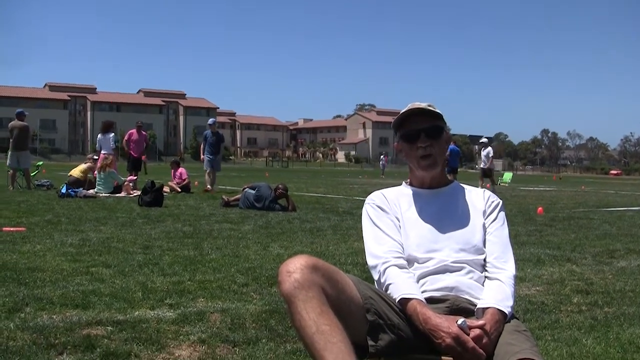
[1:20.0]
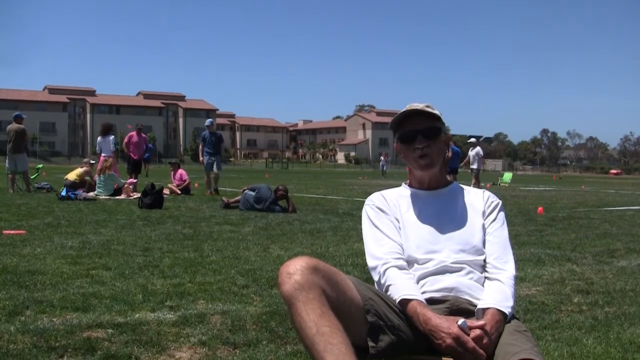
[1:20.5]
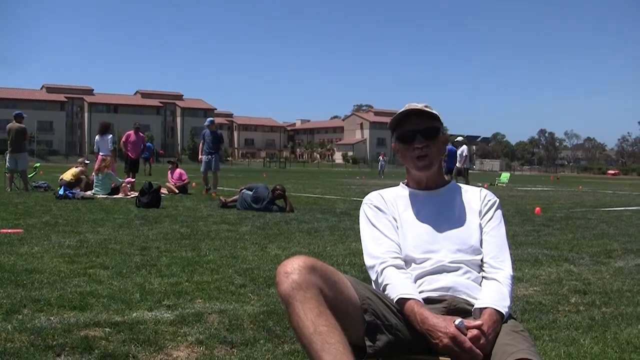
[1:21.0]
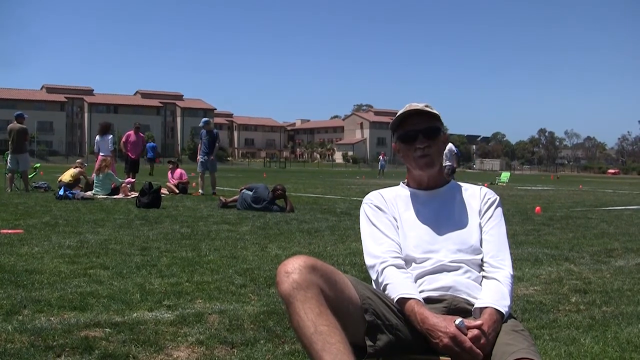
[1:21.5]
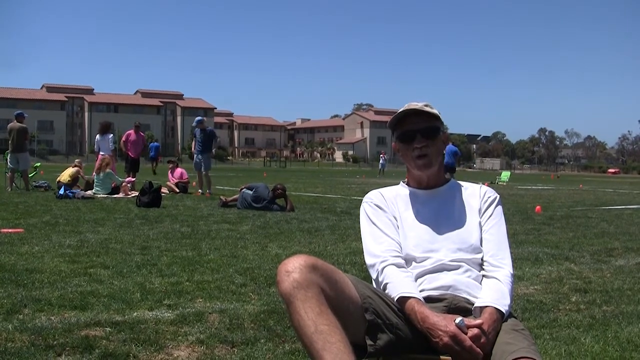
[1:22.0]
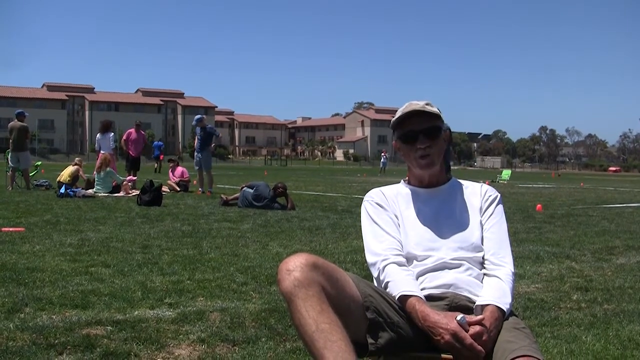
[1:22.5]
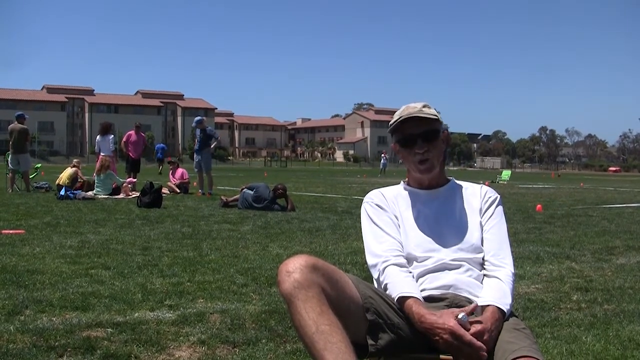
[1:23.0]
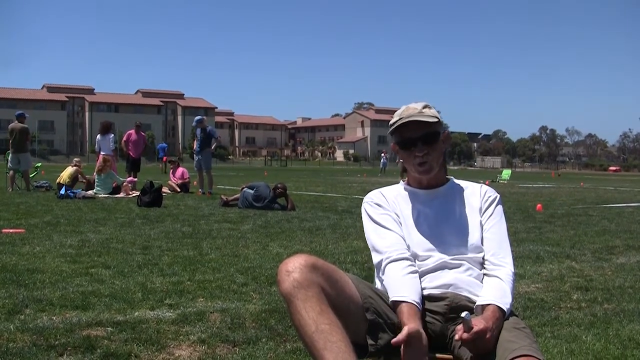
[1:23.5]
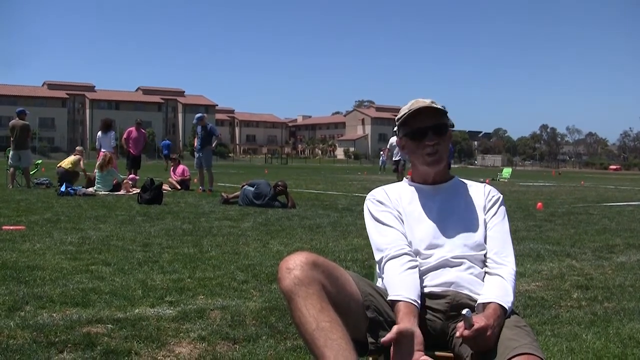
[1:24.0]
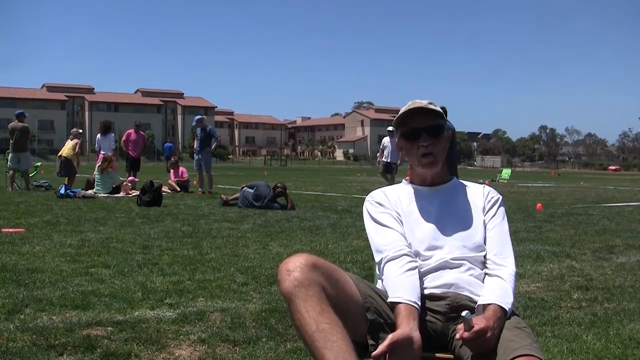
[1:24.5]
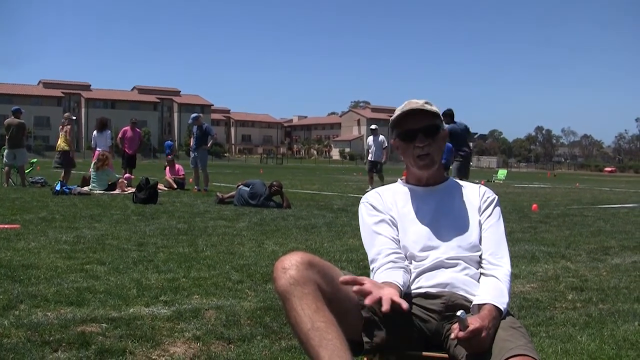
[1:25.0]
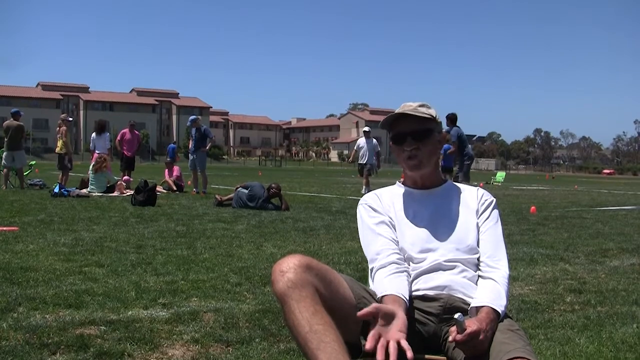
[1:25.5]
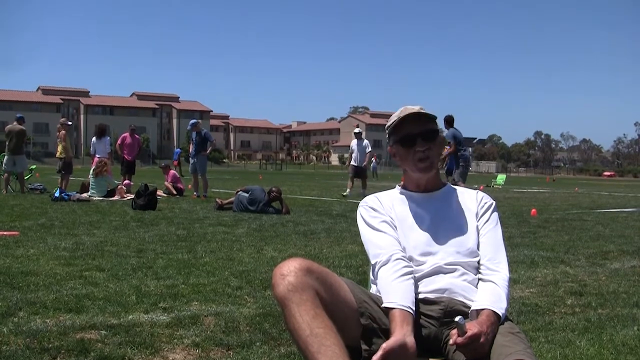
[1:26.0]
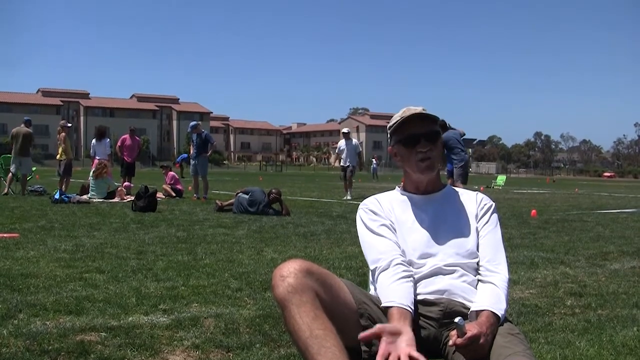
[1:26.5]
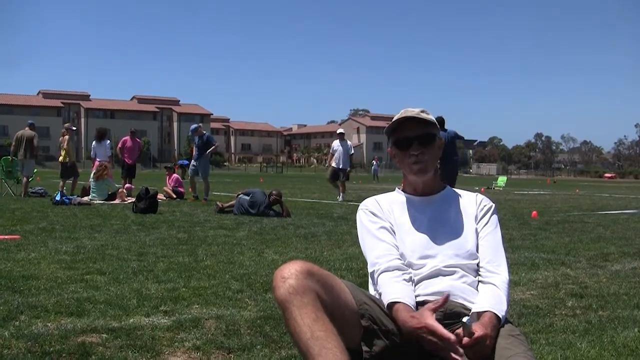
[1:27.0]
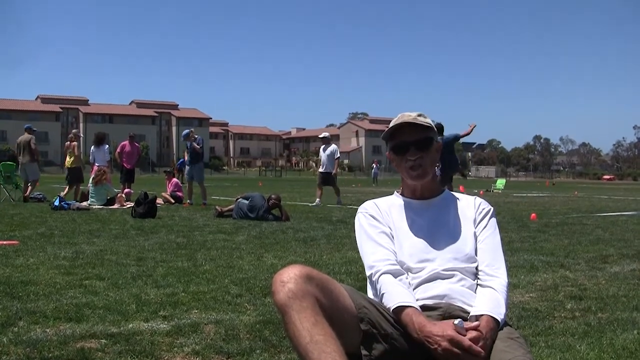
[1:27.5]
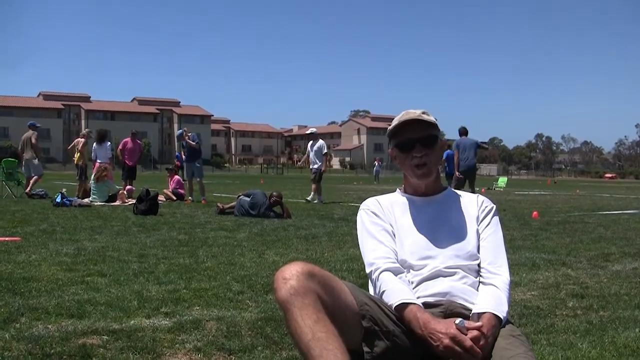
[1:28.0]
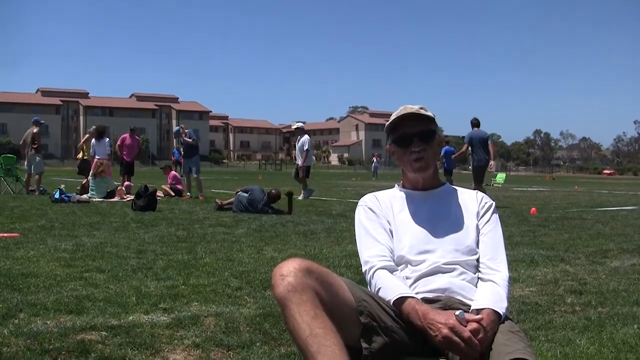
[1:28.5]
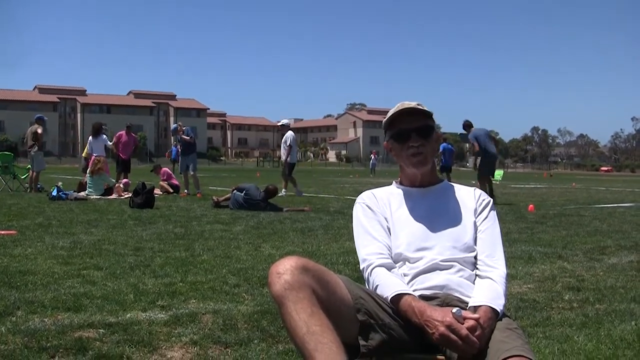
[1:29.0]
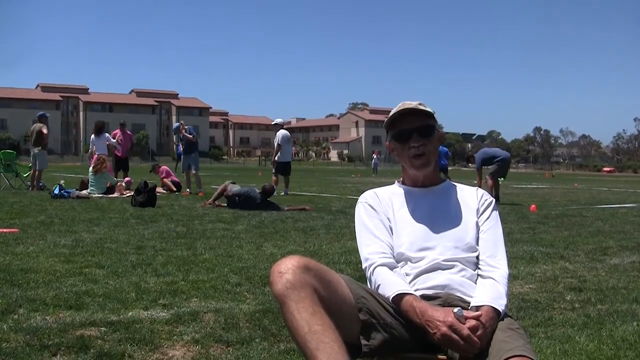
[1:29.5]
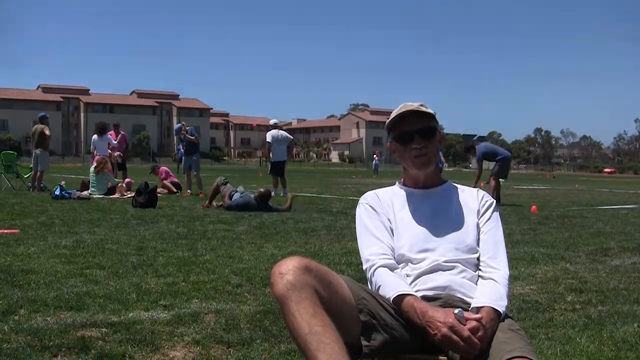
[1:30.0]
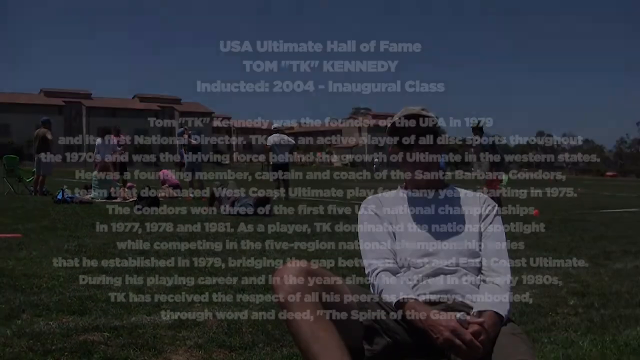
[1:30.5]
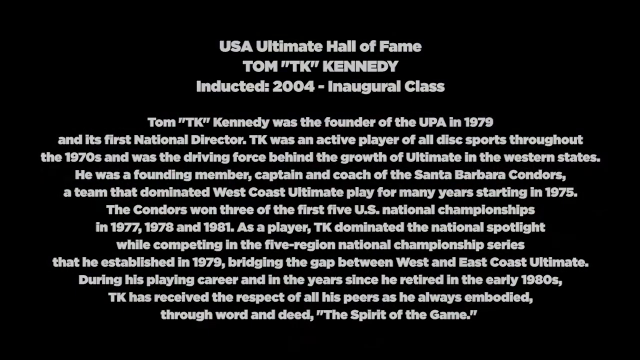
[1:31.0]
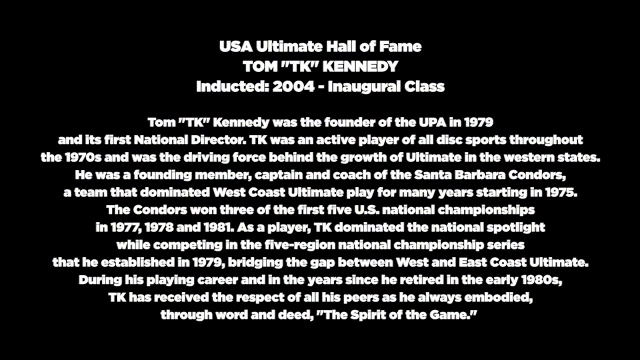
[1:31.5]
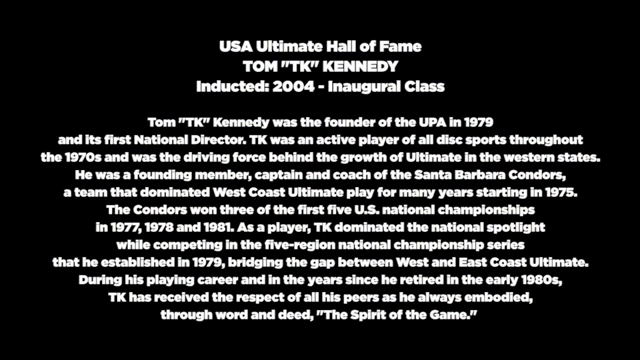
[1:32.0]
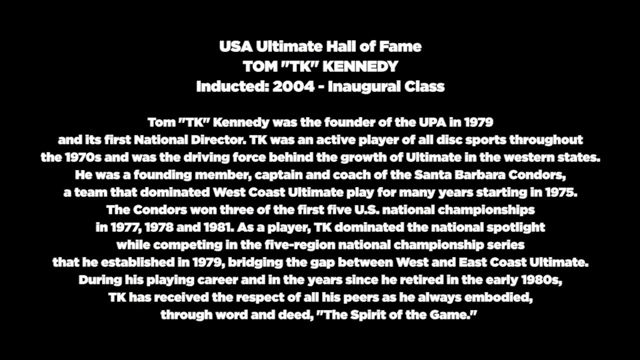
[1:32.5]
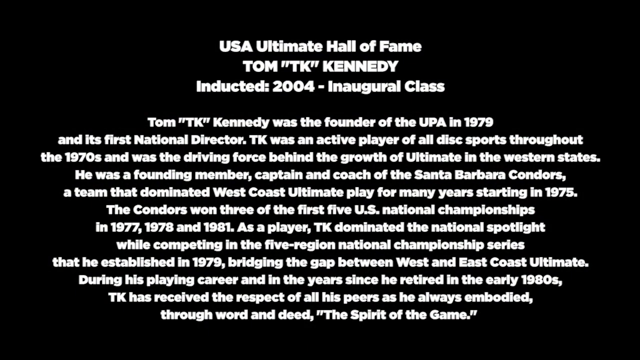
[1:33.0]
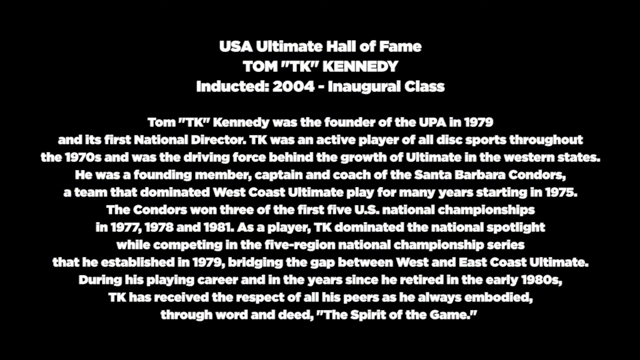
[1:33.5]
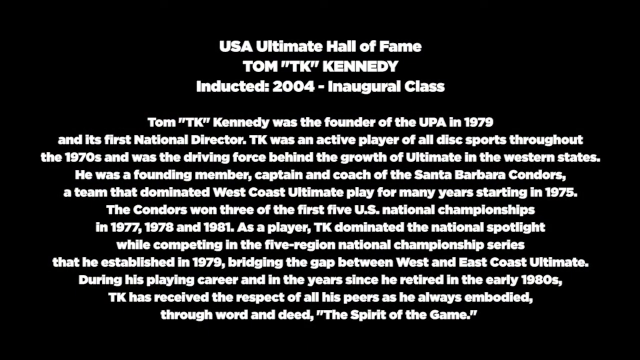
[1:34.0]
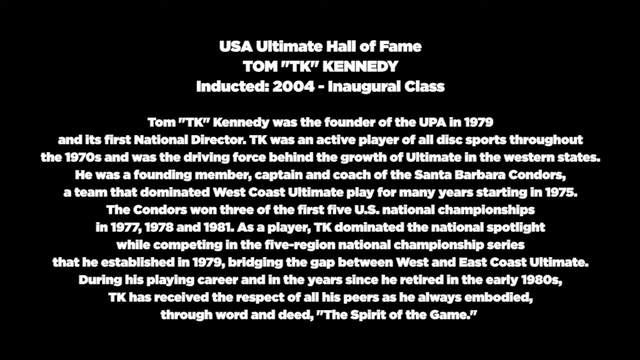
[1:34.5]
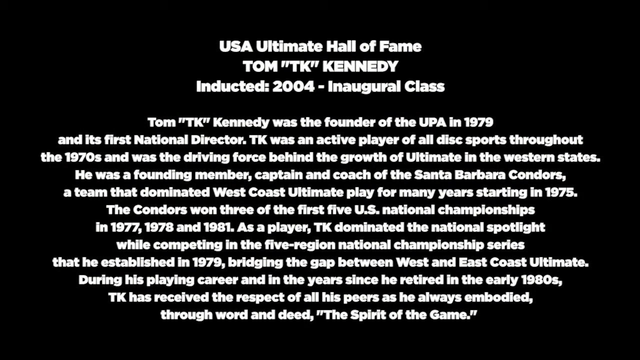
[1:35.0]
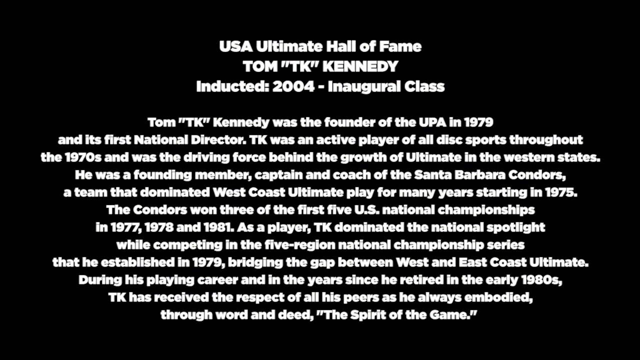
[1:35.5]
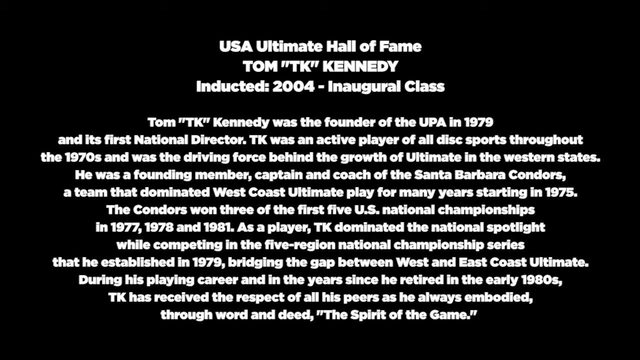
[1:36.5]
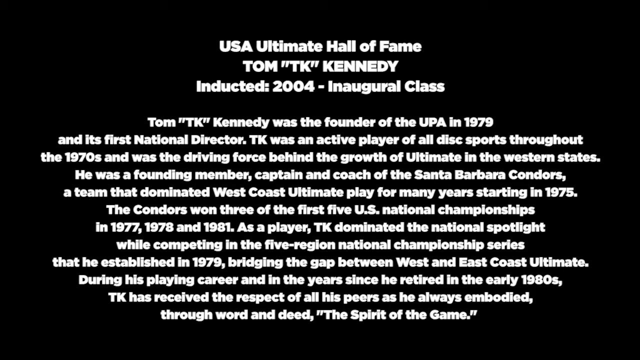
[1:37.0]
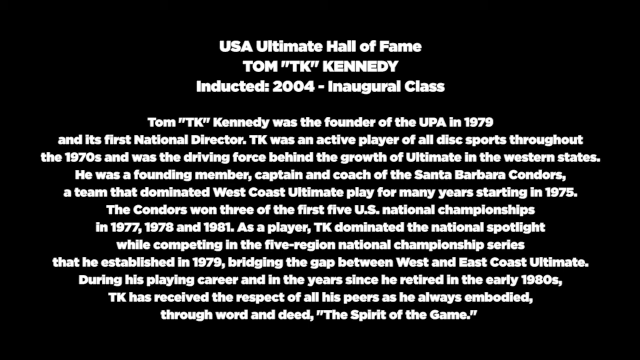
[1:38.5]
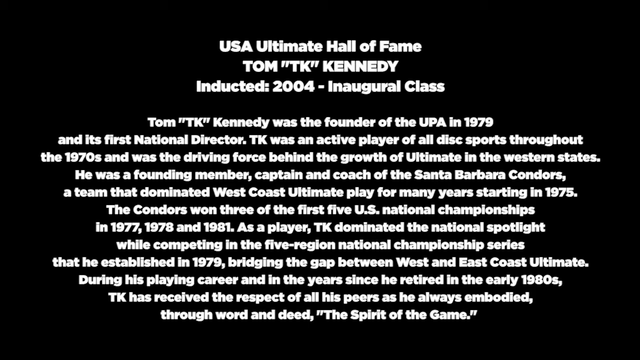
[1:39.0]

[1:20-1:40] Tom Kennedy is still being interviewed and responding, now holding the microphone in his left hand and holding his right hand out toward the interviewer, apparently in a gesture of explaining something. His body language is not aggressive; he looks laid back as he responds. In the background, two of the people from the blanket have now stood up; they look to be mid to late teen or young adult females. One wears a white top, and the other appears to wear a yellow tank top and a hat. A person in a dark-colored shirt and shorts is talking to a woman in a hot pink shirt who sits on the ground facing the group on the blanket; she looks up at this person as they look down at her. Another man in the background stands with his arms crossed, wearing light-colored shorts and apparently a dark green shirt, as a person in a white short-sleeve shirt, a hat and dark shorts walks down the field toward them. The older Black man is still relaxing, lying on his right side with his right arm bent, holding his head. A younger man wearing a shirt of a similar color to the Black man's is still doing tricks with the Frisbee by himself, having gone from tossing it between his arms to also tossing it around with his feet.